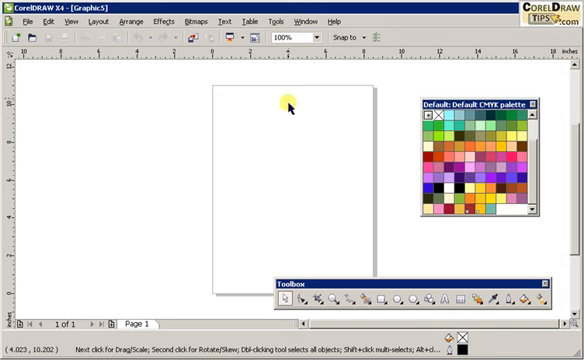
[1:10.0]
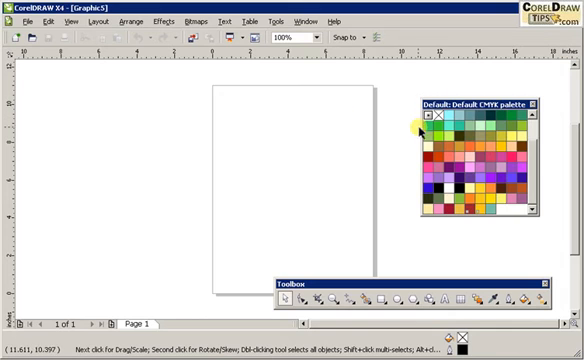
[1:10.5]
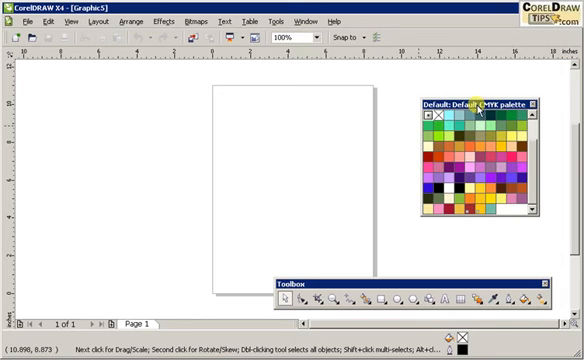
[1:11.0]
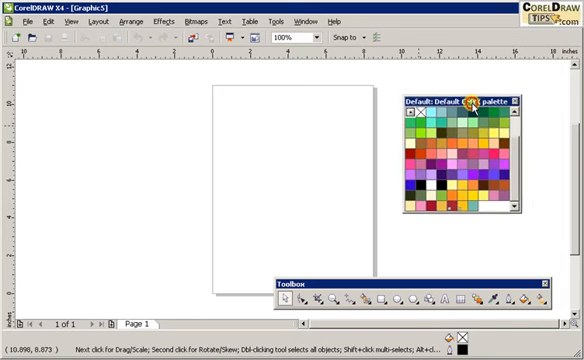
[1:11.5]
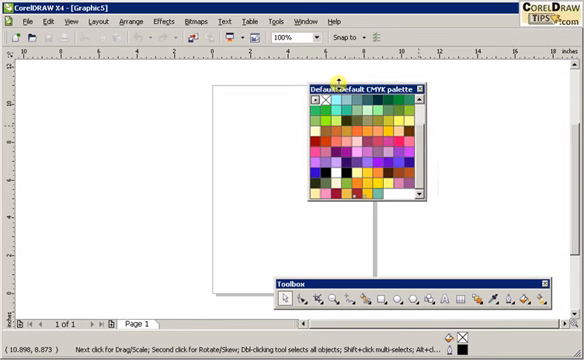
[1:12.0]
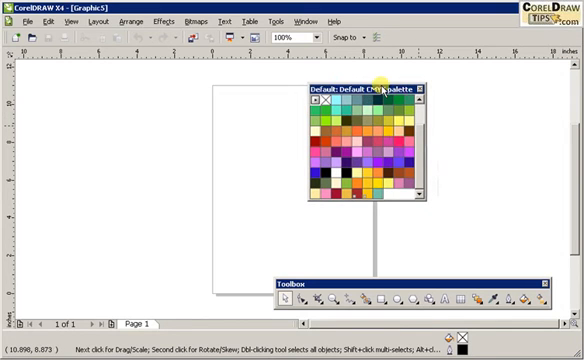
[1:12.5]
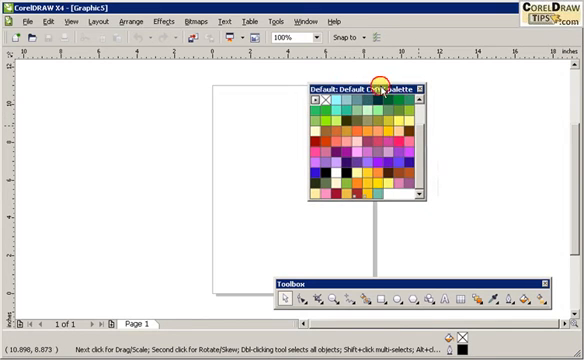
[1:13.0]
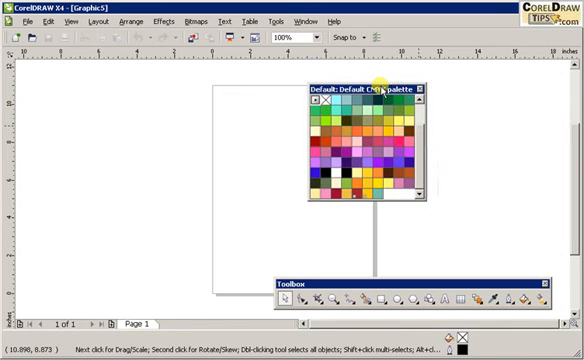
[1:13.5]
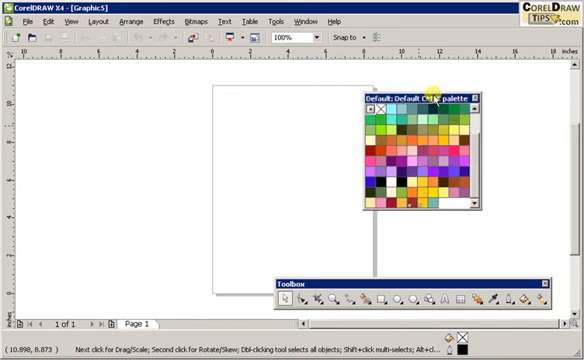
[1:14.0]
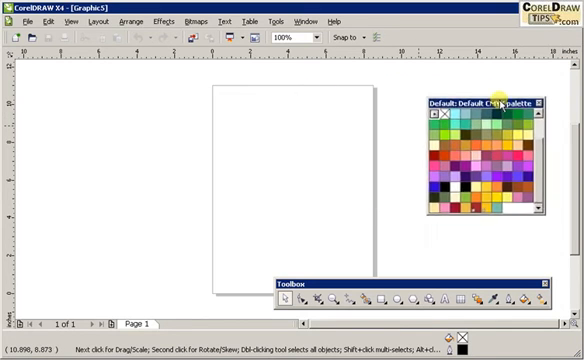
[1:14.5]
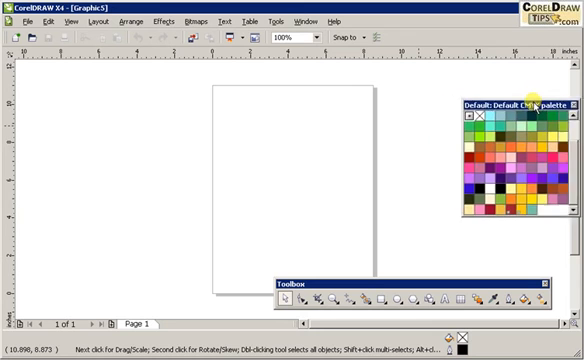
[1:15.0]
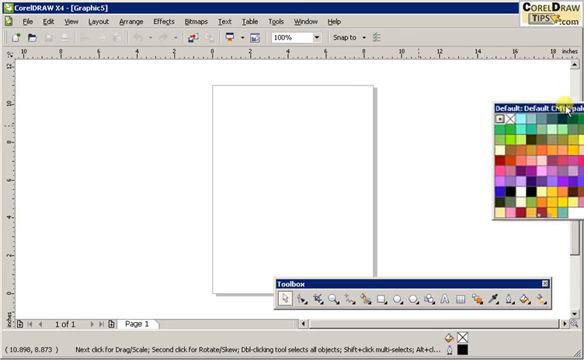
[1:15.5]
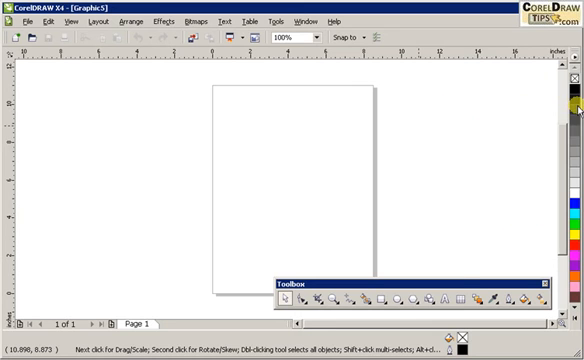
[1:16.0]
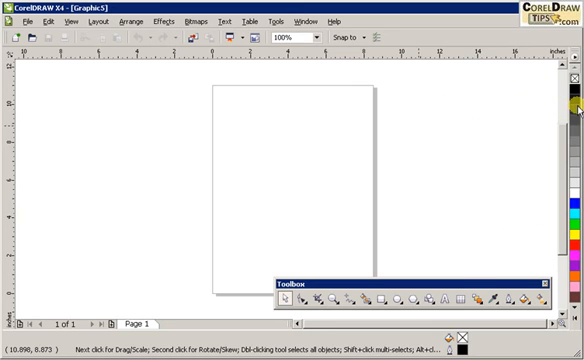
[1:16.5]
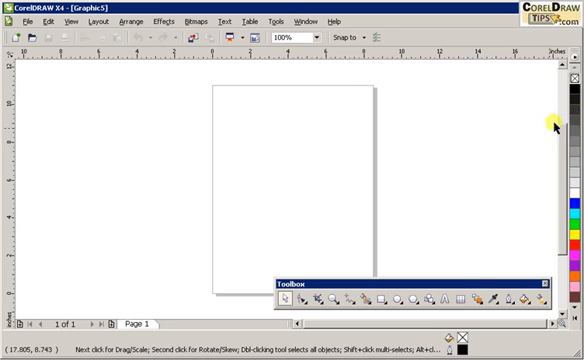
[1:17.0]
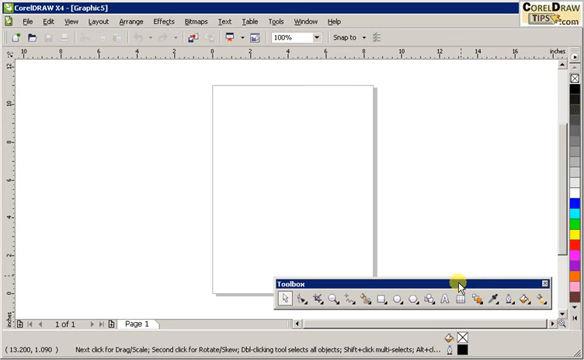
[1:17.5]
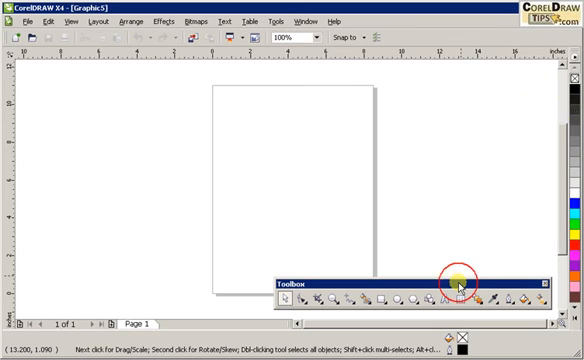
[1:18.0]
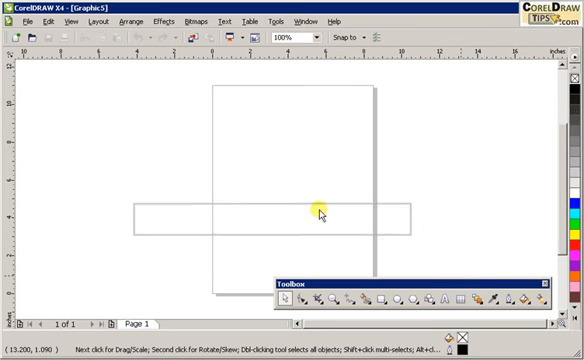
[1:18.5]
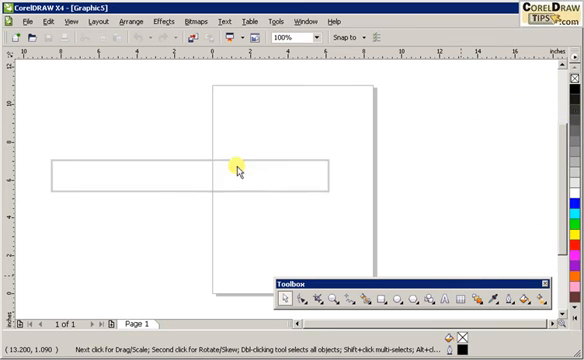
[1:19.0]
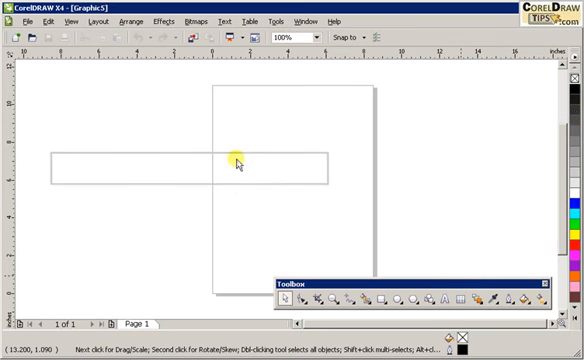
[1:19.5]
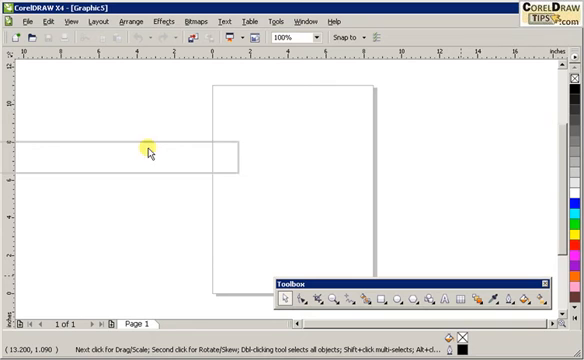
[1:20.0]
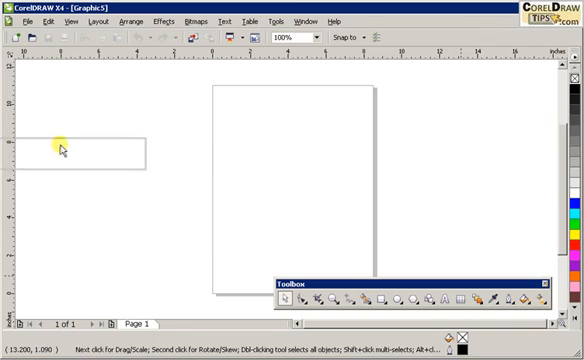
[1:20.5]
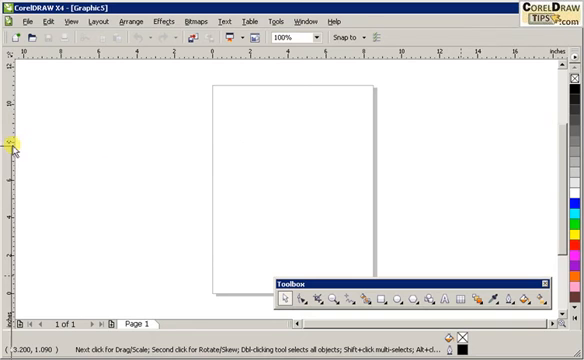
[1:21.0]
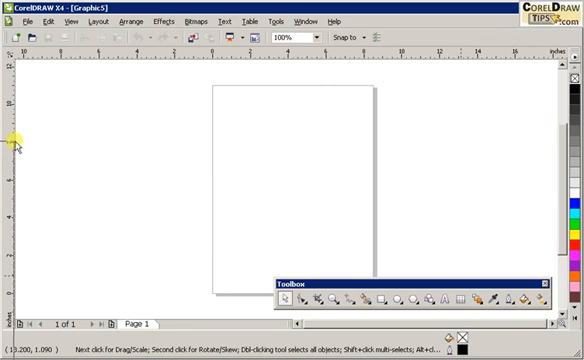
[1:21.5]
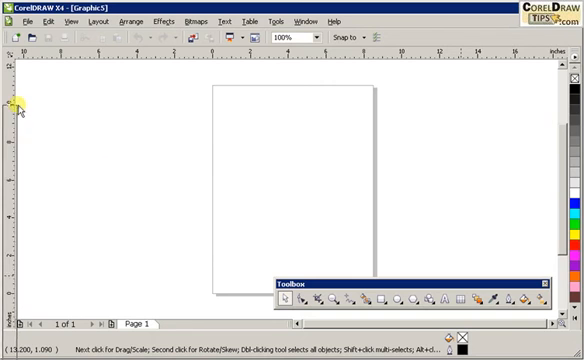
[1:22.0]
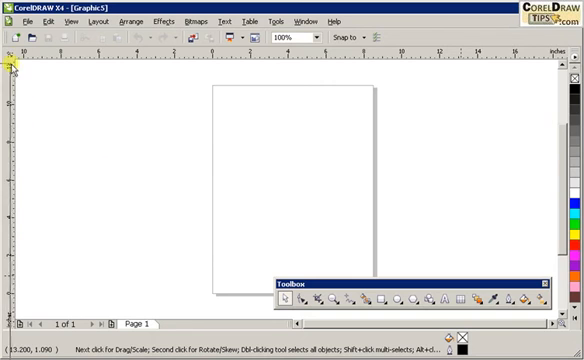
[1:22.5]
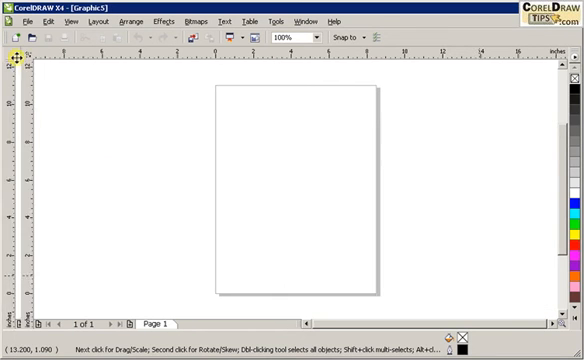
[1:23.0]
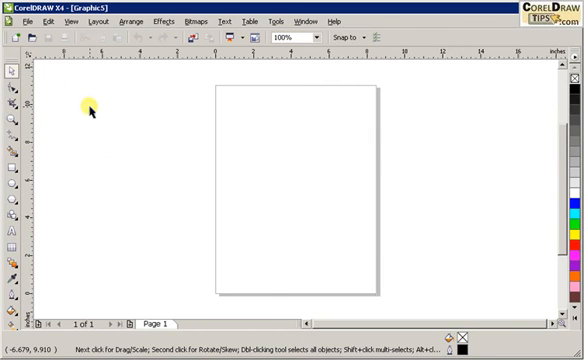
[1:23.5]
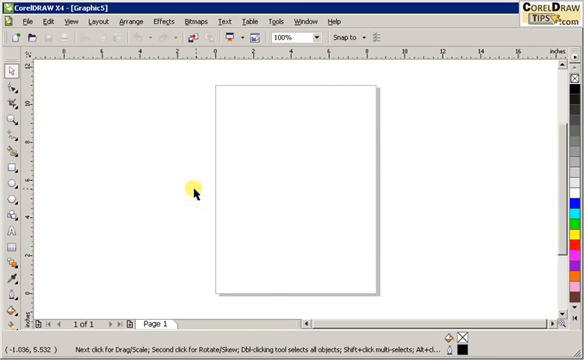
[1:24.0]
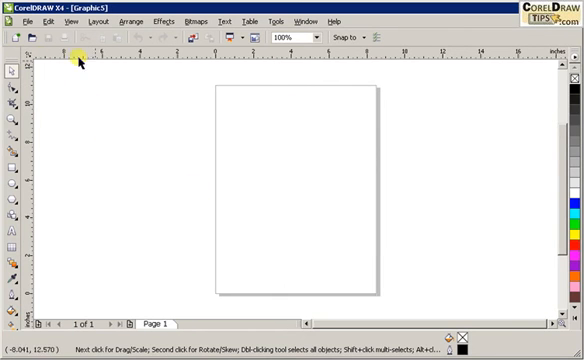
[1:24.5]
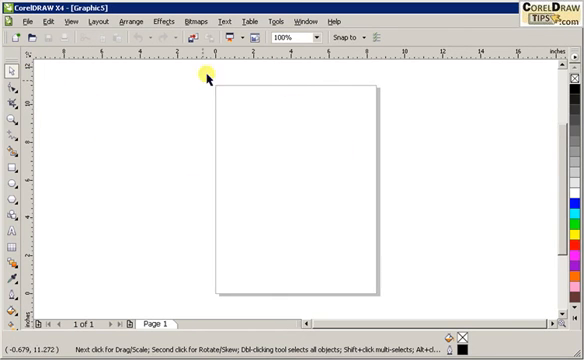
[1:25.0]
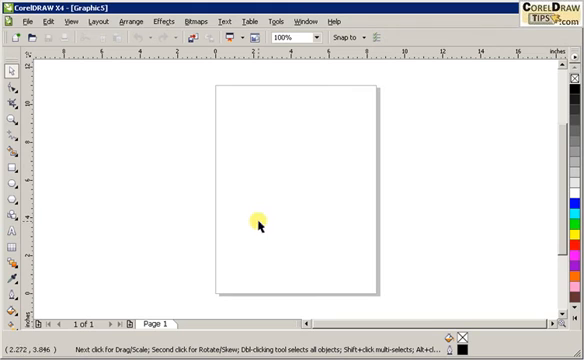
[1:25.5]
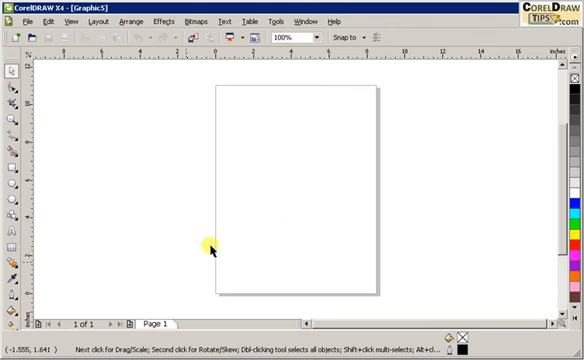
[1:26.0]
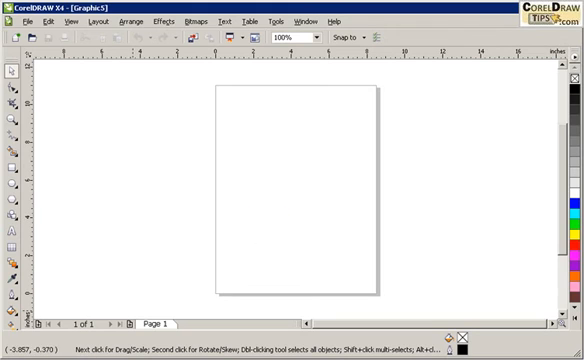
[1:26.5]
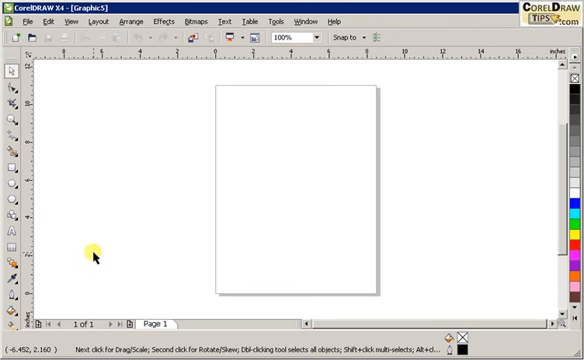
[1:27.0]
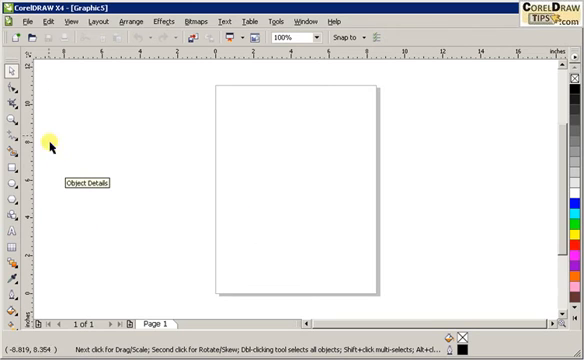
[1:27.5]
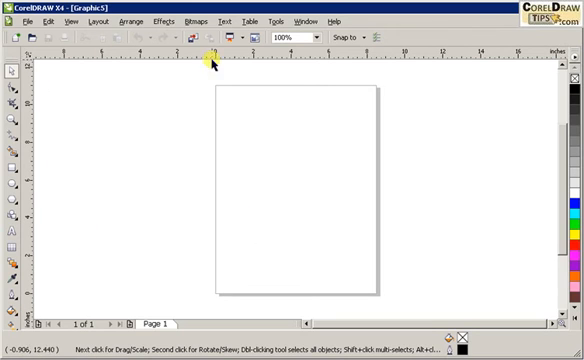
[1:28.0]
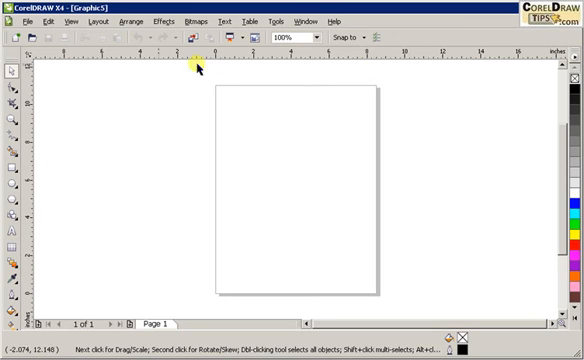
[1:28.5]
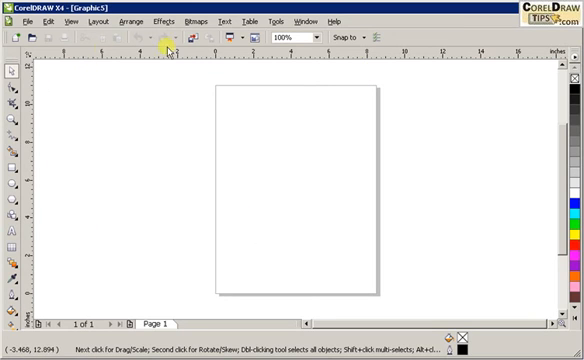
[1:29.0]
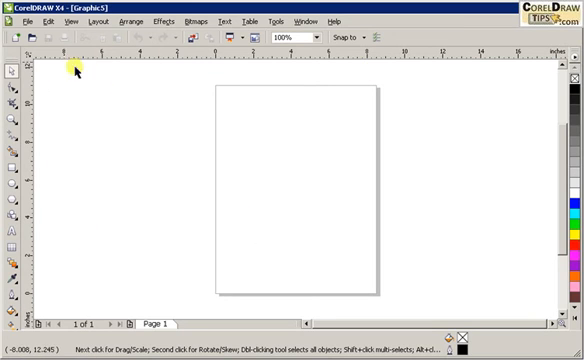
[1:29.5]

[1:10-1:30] The white blank document has an insert down its center, with the color palette on the right-hand side at the top and the toolbox on the right-hand side at the bottom. The cursor, with a yellow circle at its tip, goes to the center of the document, then moves to the fifth color along the top row of the color palette. It hovers over the word "color" on the palette's title bar and uses that top bar to drag the palette to the right-hand side of the screen, leaving it there. It then drags the toolbox back to the left-hand side of the screen and leaves it as the outside toolbar. The cursor moves about, showing numbered options on both the vertical and the horizontal, which appear to be margin border options.